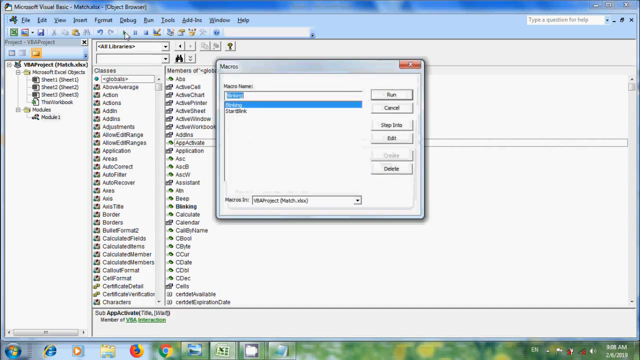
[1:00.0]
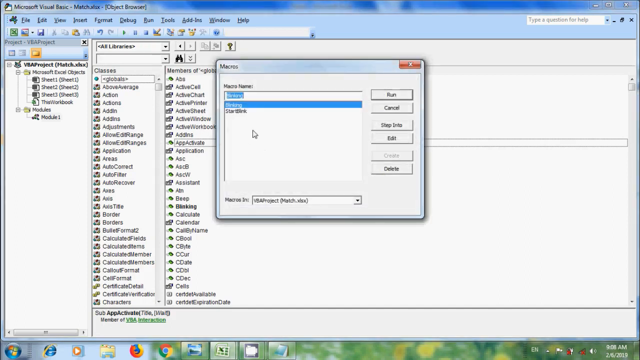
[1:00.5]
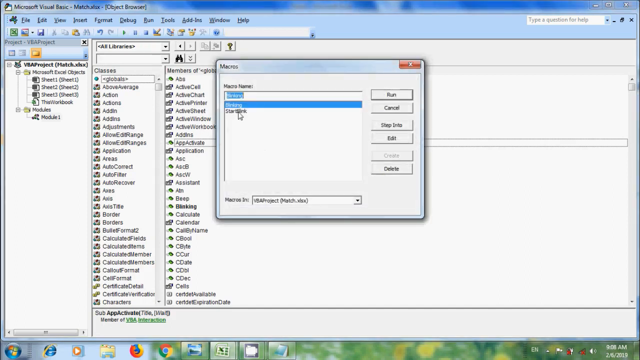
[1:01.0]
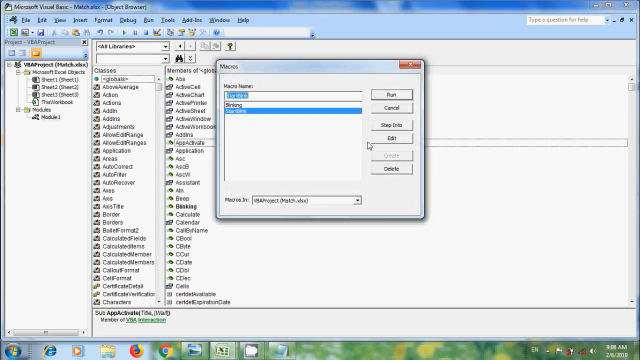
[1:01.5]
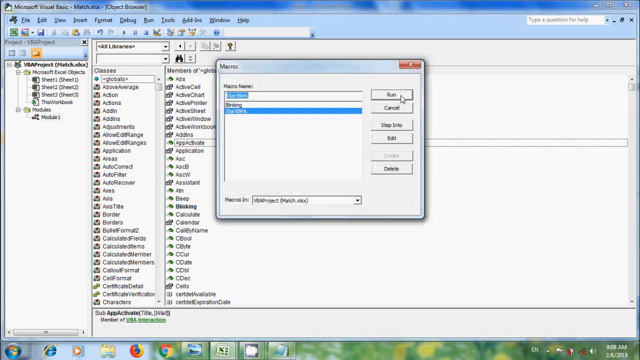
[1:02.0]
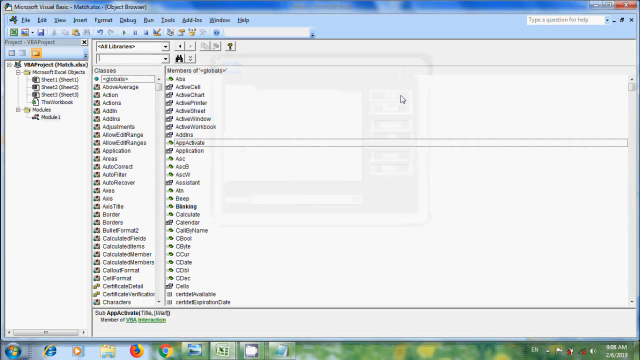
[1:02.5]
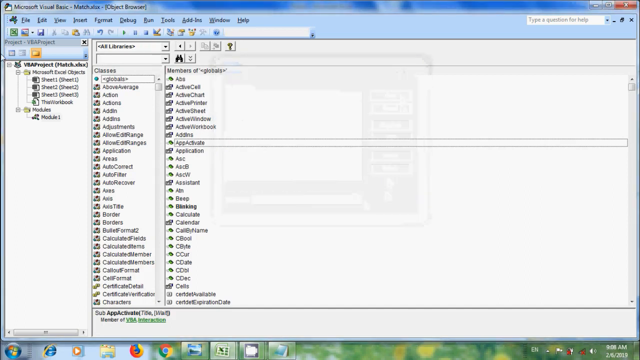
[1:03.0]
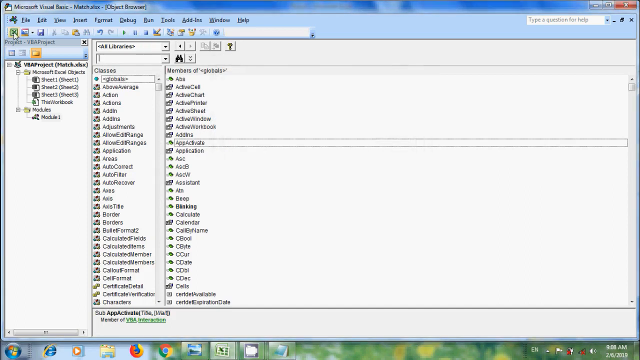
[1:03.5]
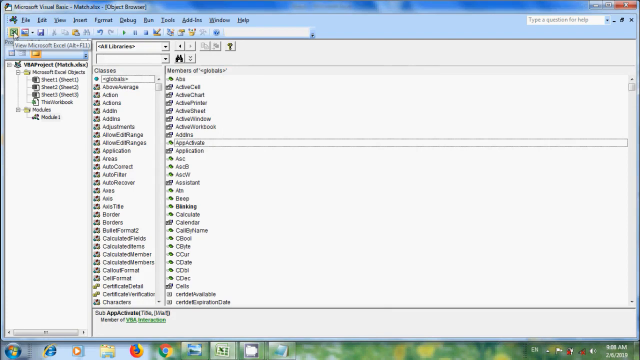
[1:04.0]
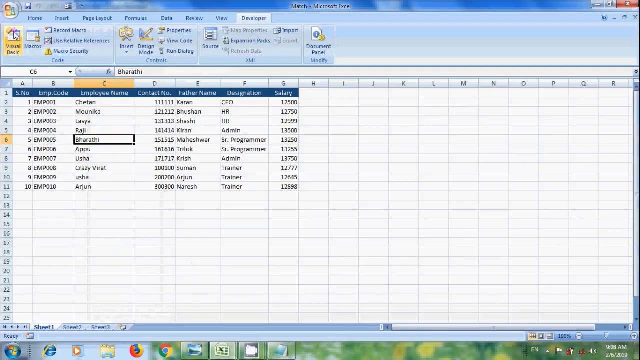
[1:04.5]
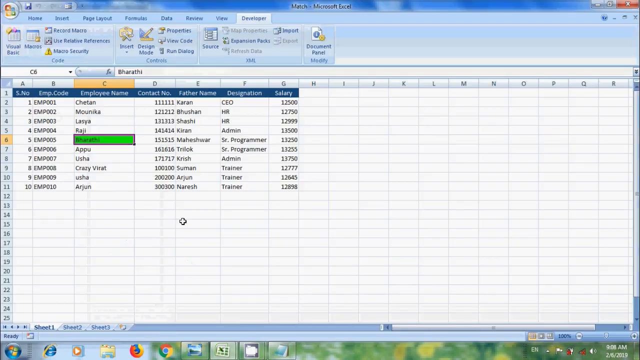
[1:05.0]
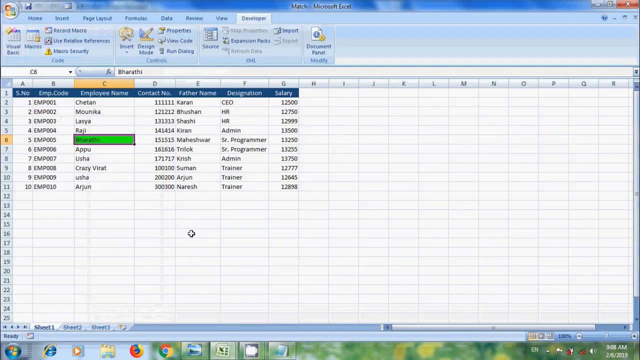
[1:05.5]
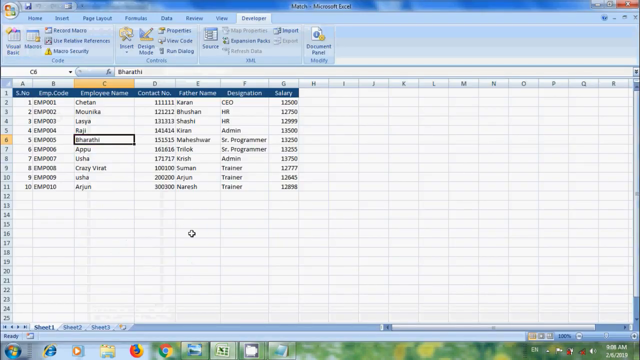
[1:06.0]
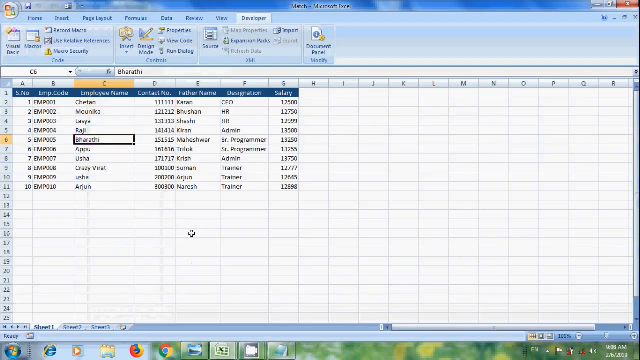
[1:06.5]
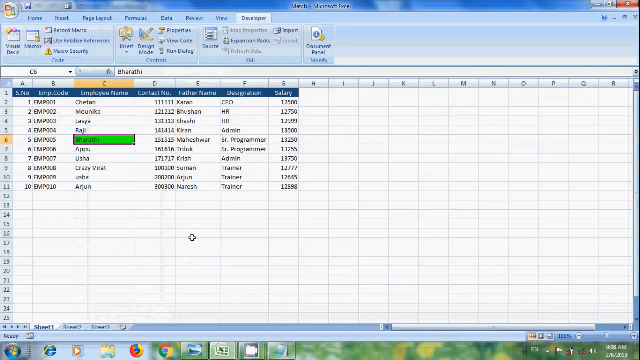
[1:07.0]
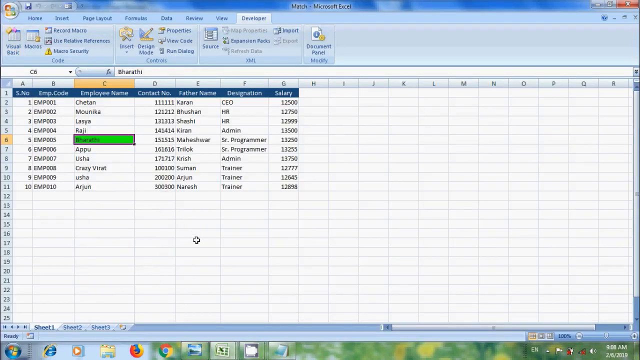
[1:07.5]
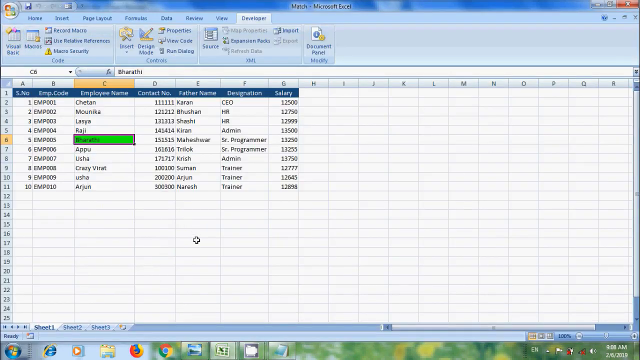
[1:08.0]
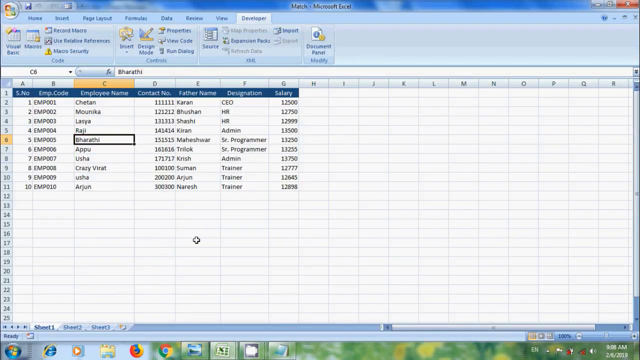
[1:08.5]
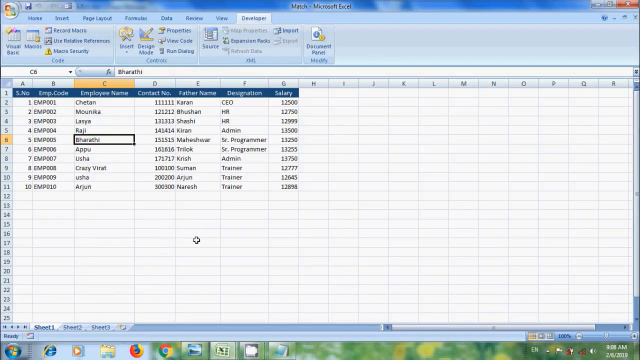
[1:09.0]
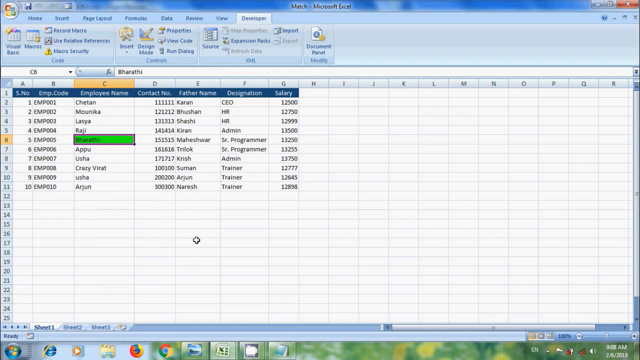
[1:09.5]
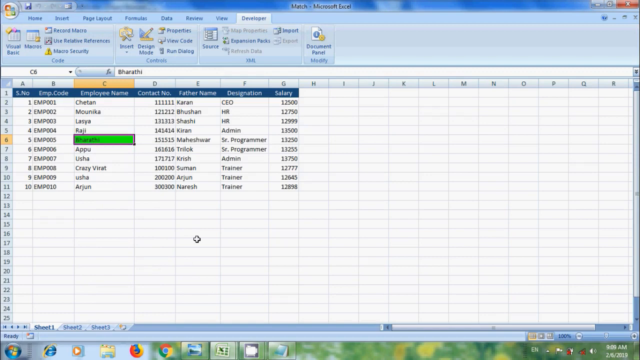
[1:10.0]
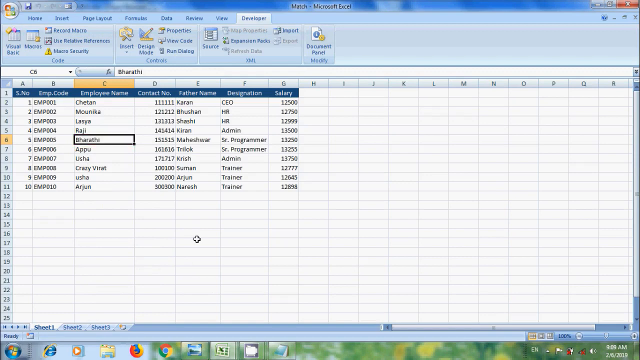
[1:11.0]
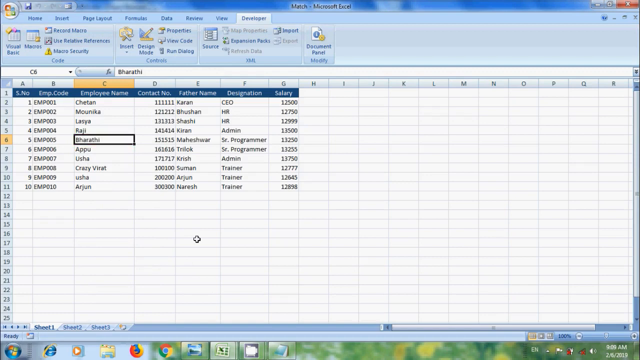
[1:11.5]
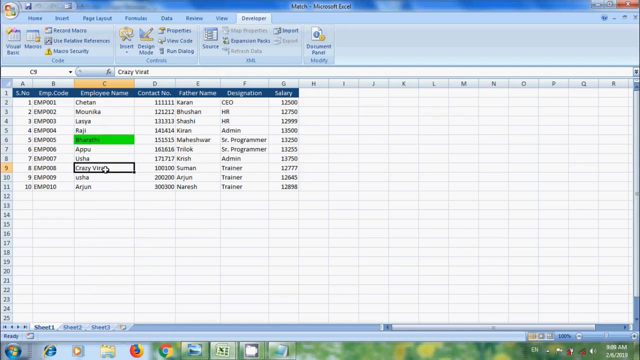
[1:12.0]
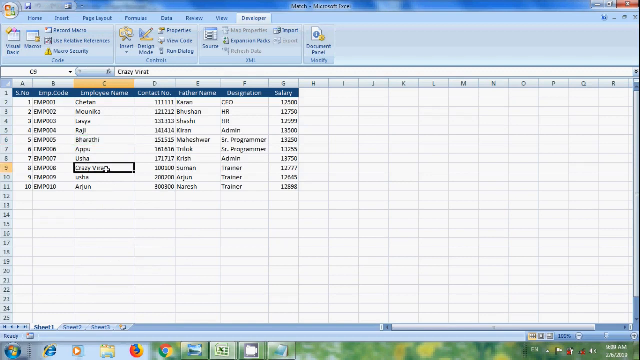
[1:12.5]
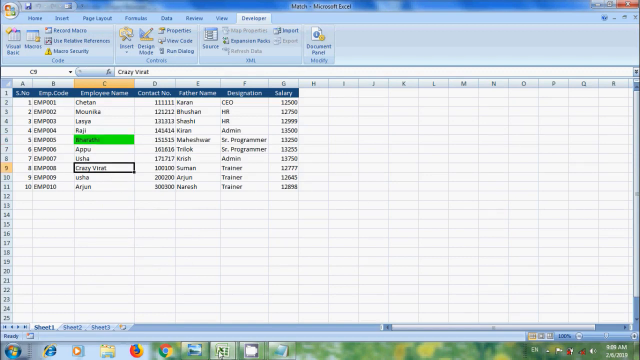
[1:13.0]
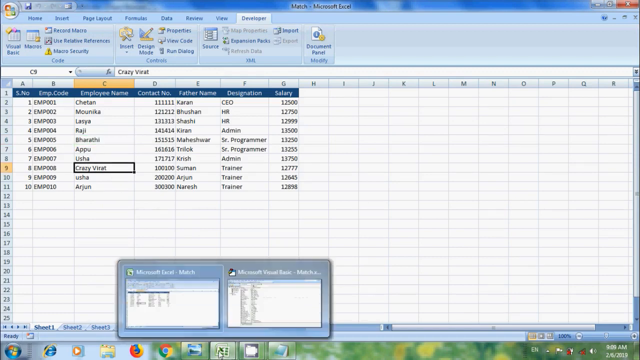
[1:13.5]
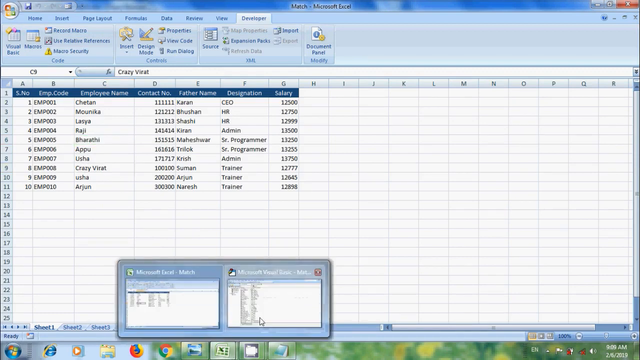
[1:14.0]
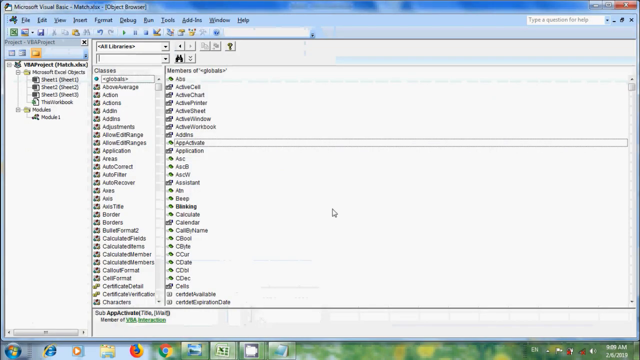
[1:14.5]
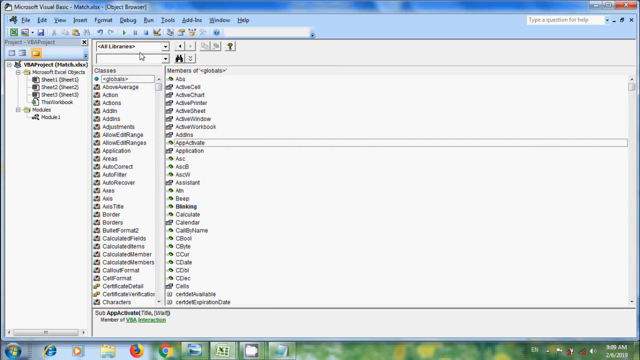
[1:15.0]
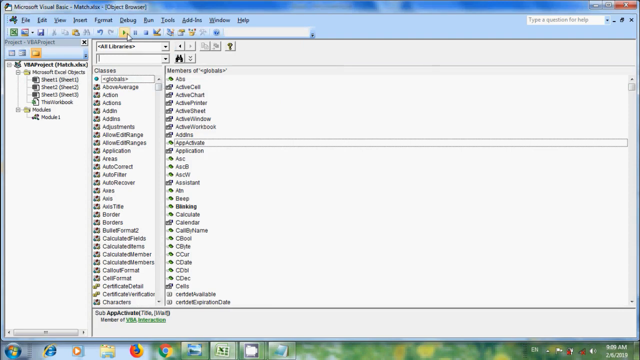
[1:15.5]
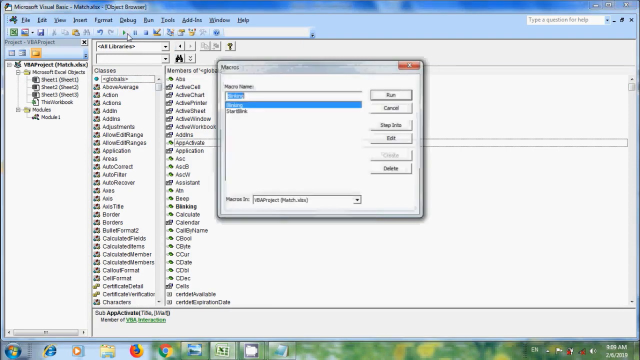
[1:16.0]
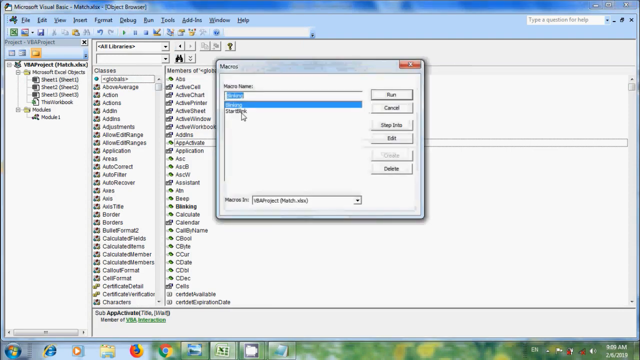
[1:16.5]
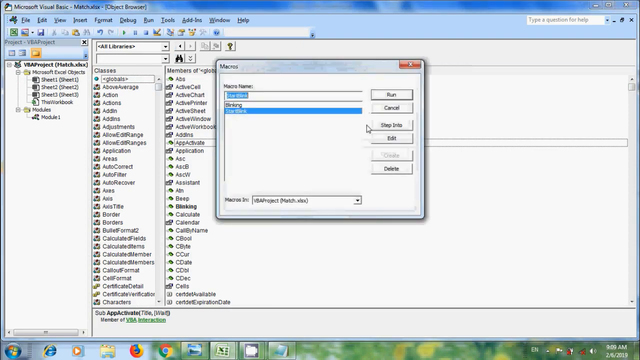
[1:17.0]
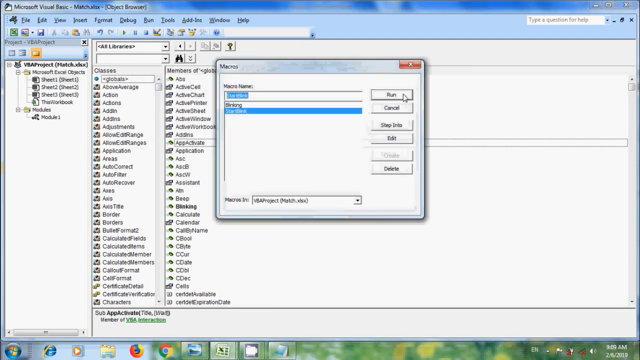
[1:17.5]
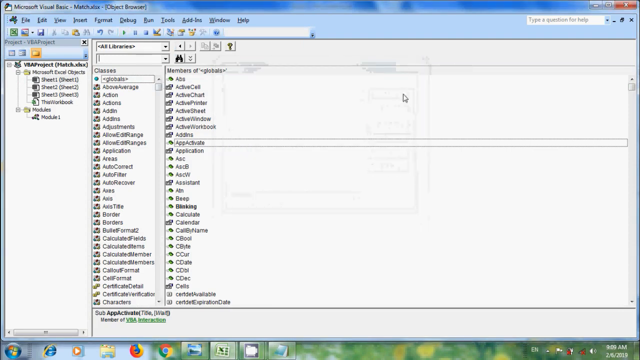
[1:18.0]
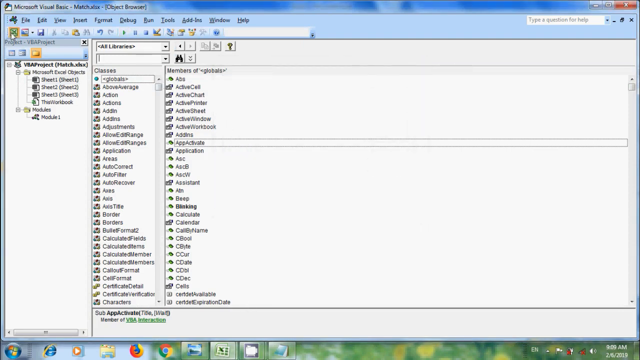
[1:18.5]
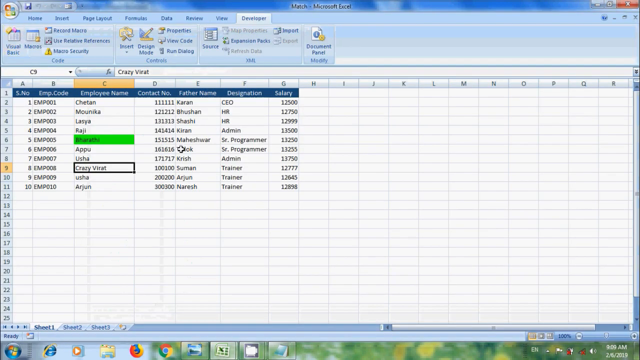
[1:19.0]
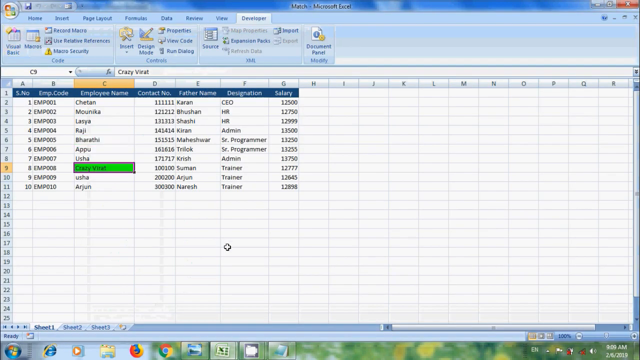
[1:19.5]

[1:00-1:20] The user comes back into Microsoft Visual Basic, trying to add something related to one of the employees.